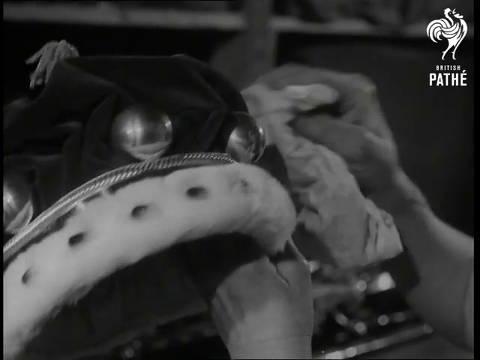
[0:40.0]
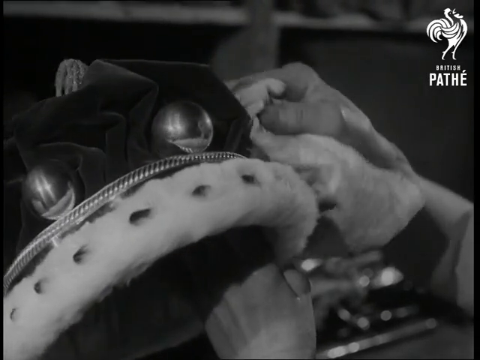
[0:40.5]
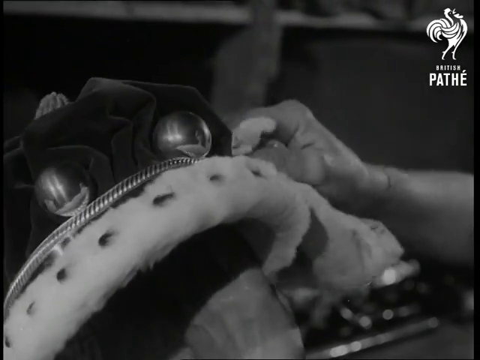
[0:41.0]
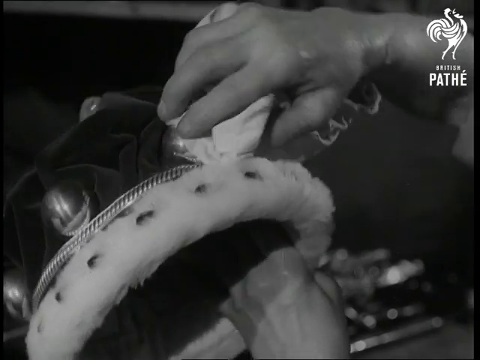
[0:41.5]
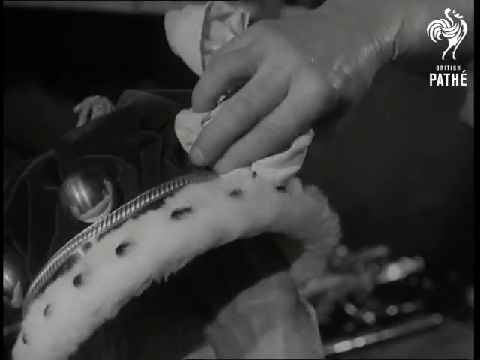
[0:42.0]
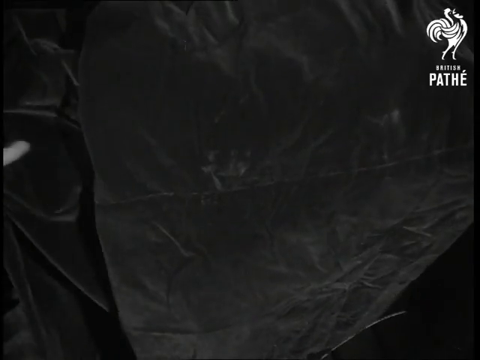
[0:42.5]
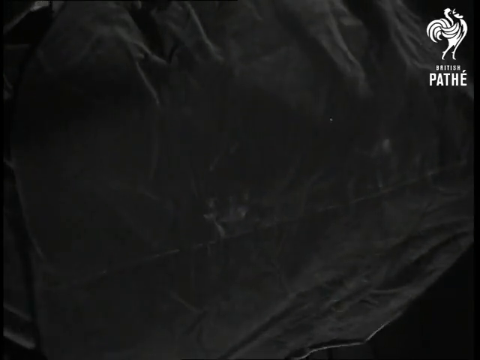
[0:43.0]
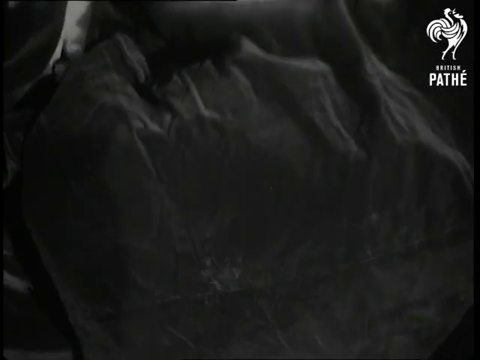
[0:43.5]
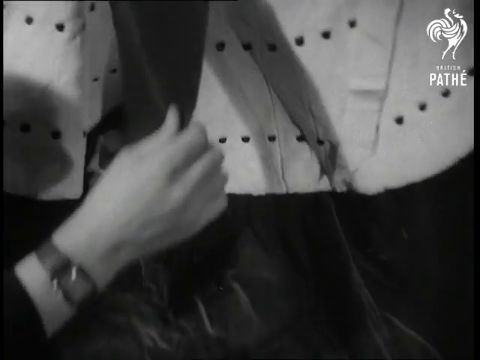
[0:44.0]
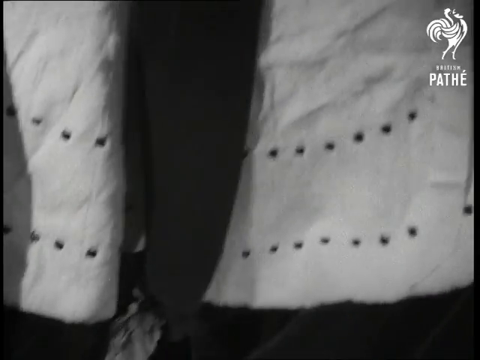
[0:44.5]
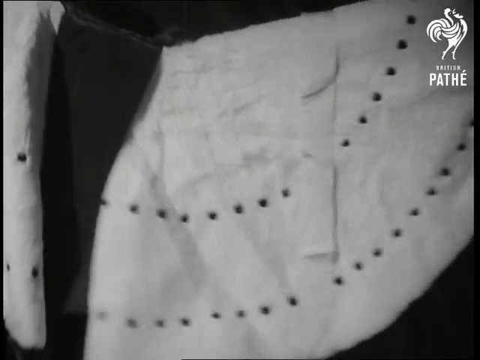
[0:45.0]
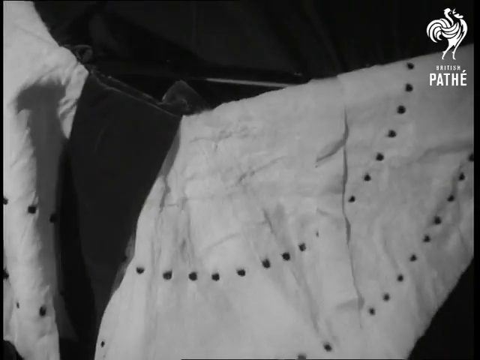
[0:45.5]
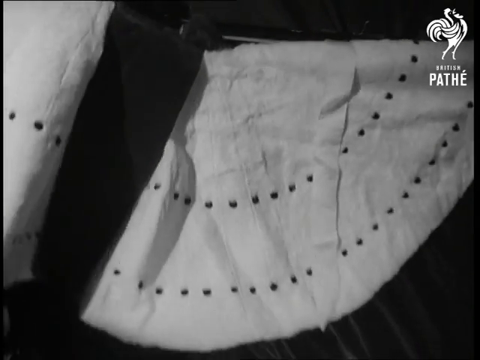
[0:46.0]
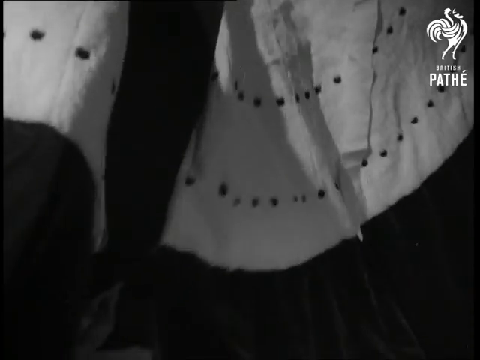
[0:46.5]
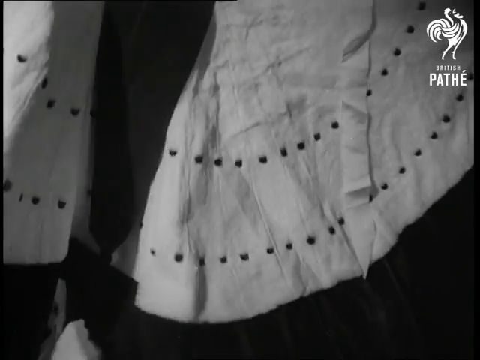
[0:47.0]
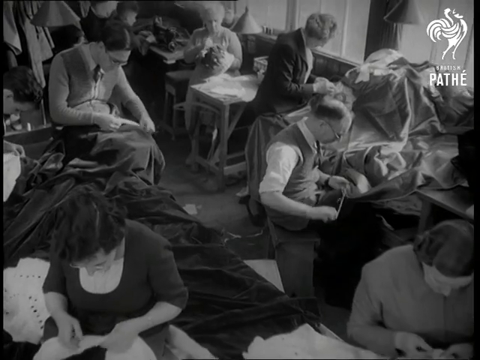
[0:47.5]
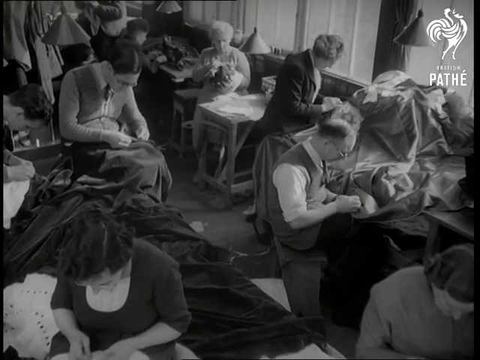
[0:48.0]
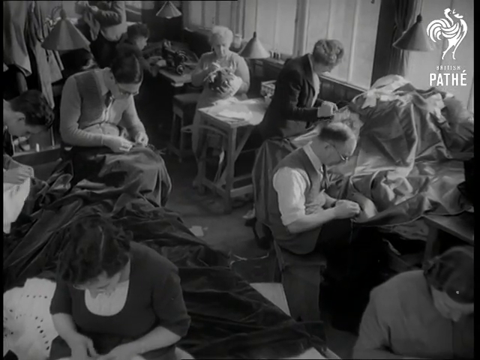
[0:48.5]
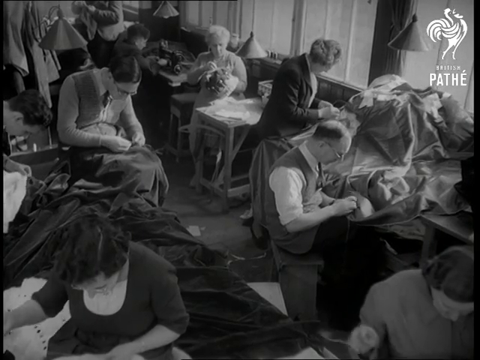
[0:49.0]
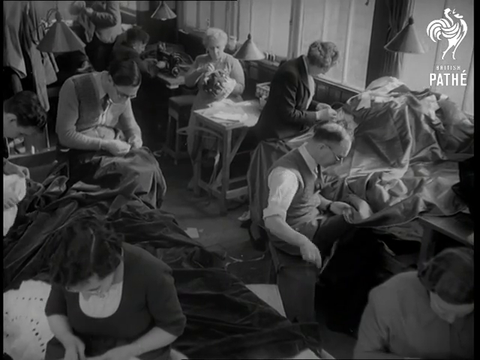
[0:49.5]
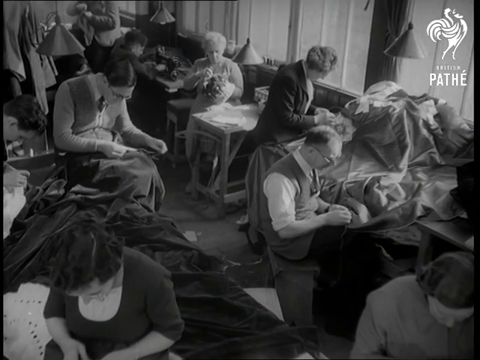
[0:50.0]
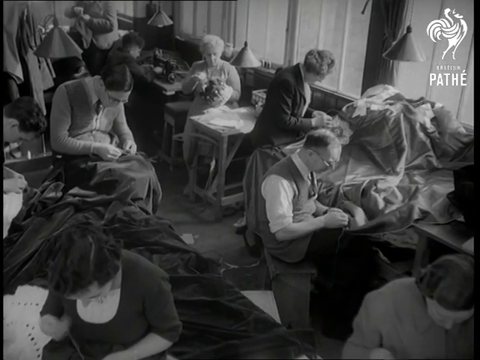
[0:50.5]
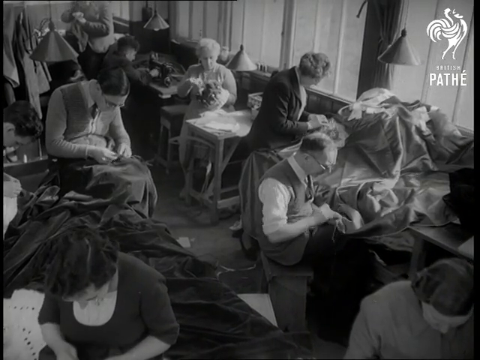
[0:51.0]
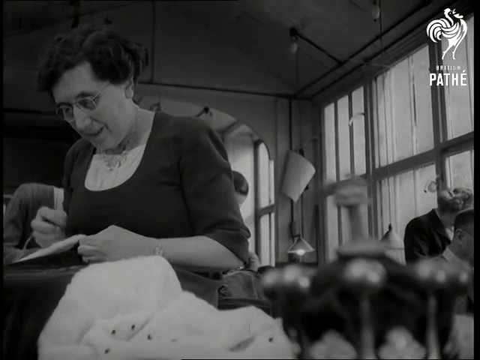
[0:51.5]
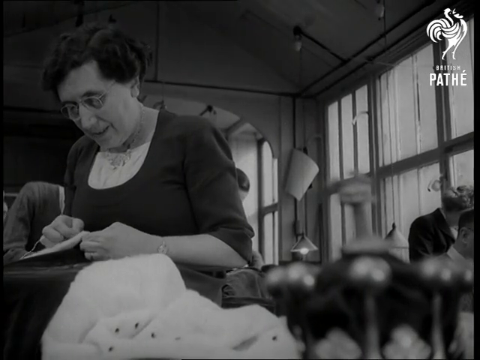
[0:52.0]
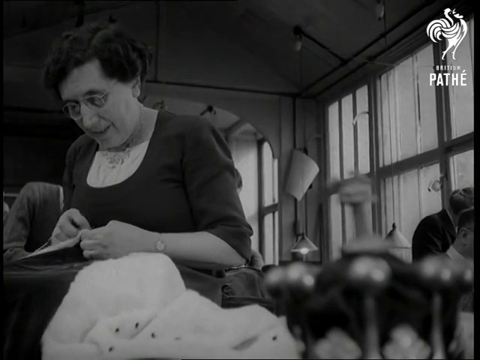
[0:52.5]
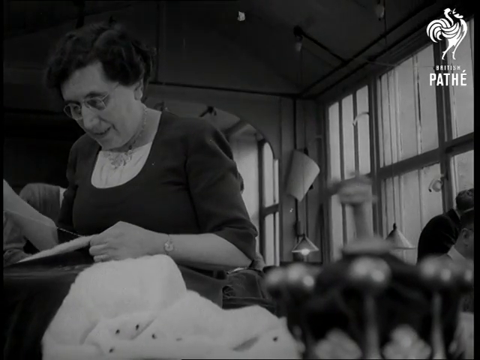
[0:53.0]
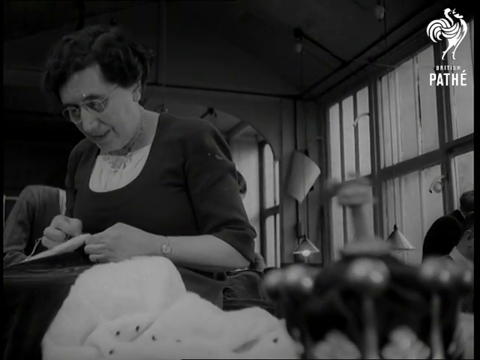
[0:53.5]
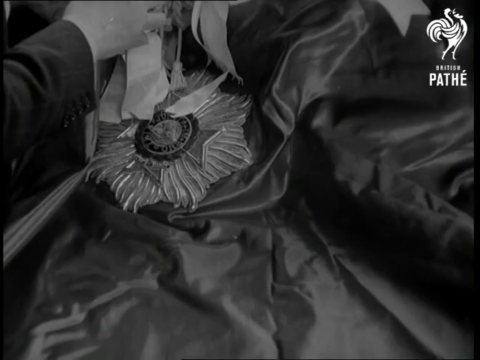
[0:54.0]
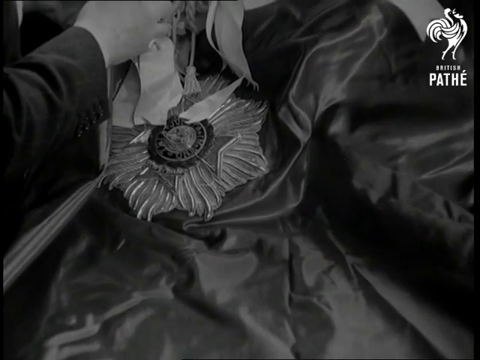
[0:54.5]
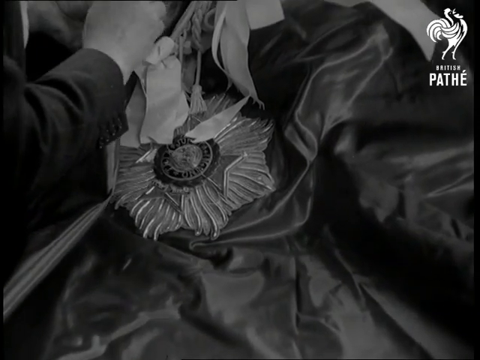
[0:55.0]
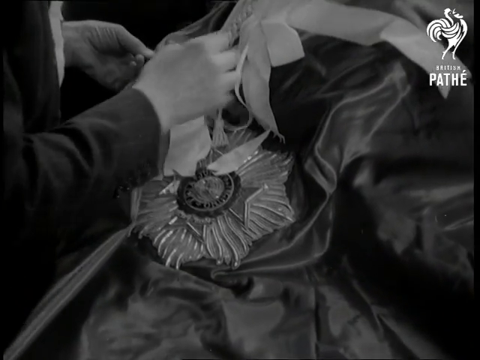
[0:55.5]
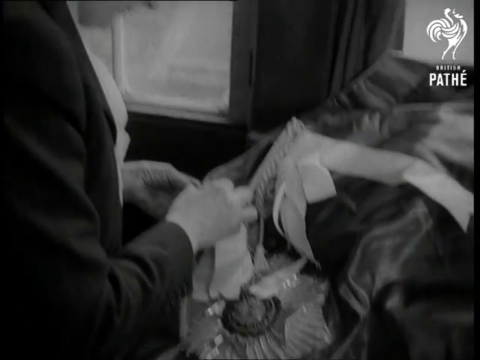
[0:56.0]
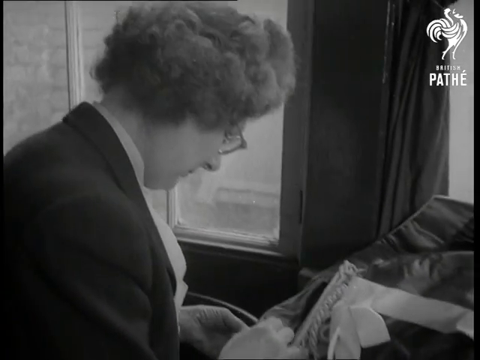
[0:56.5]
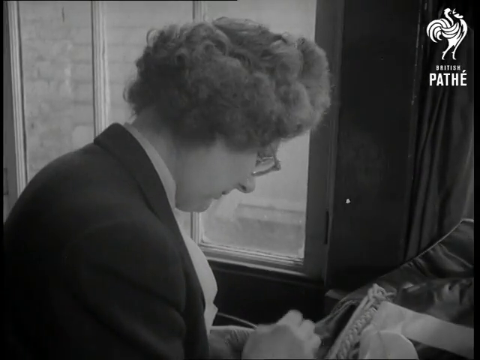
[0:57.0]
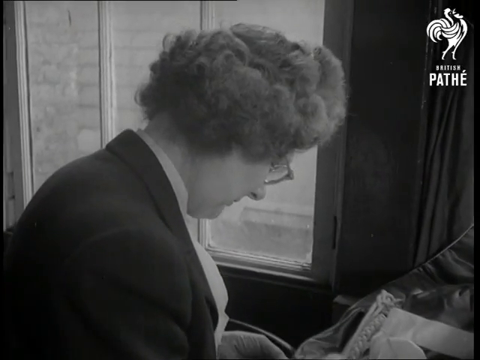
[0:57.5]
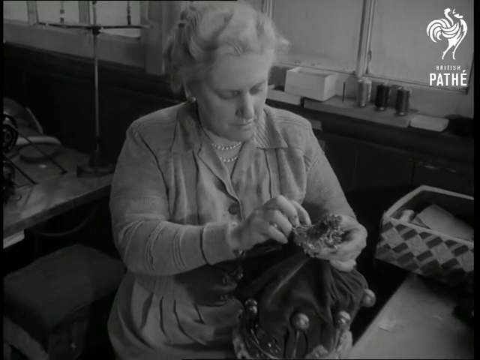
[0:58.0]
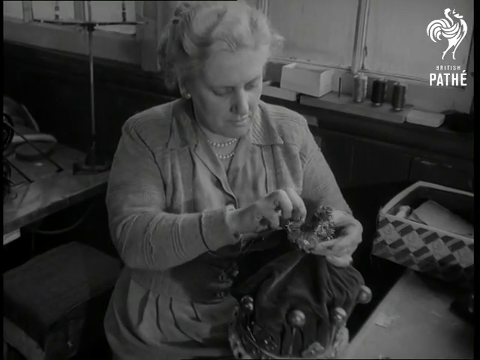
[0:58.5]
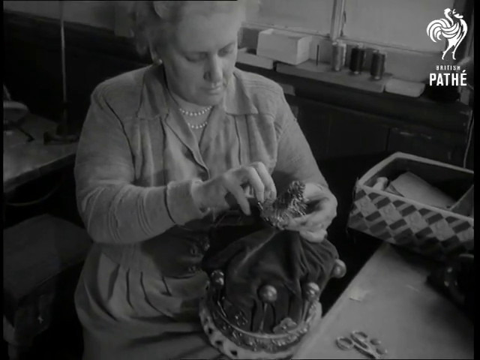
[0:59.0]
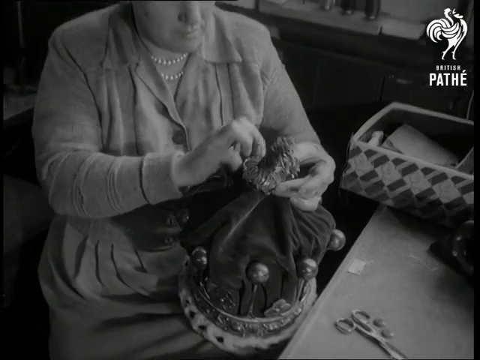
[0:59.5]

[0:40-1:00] He opens a bag containing what looks like a cape or some clothing. The scene then moves to a group of workers, women and men, at tables, stitching and/or knitting clothing, either making it from scratch or repairing it. There is a close-up of a woman wearing glasses with shorter hair, with windows and lamps in the background, followed by a close-up of the material. Another older woman with glasses works on clothing. Yet another woman, older with white hair and wearing pearls, works on a crown and looks like she is affixing something to its top. The footage remains black and white.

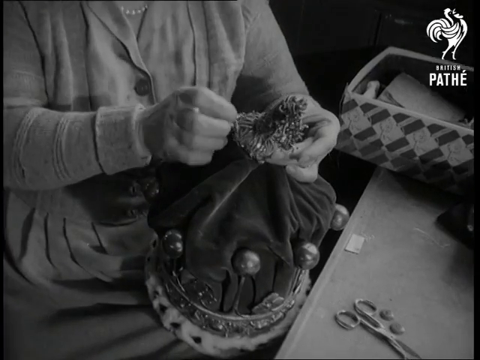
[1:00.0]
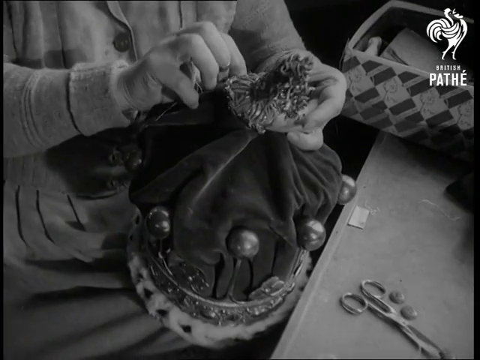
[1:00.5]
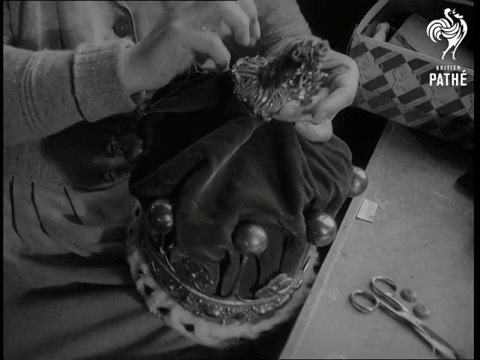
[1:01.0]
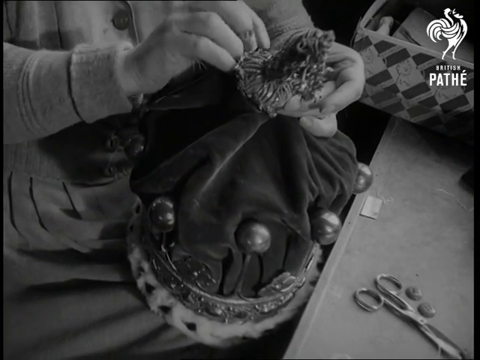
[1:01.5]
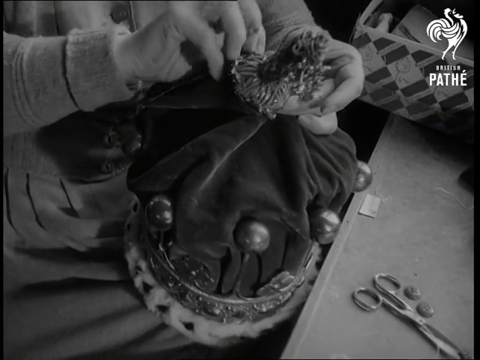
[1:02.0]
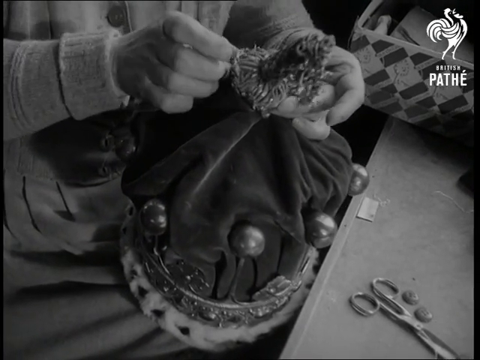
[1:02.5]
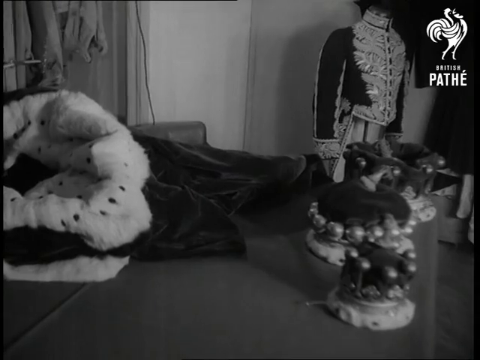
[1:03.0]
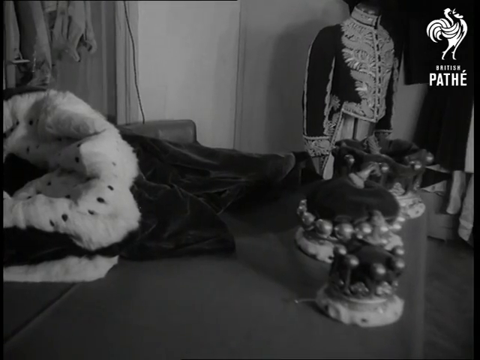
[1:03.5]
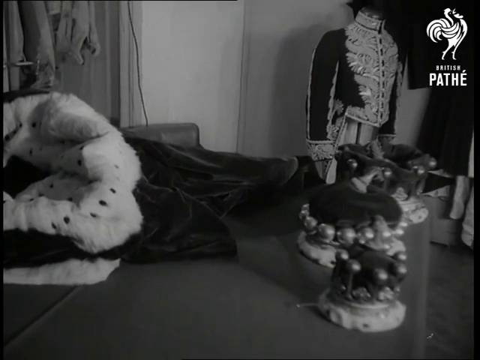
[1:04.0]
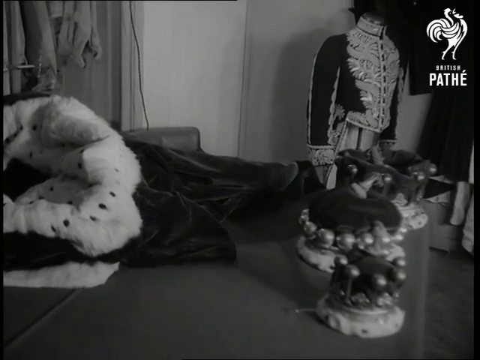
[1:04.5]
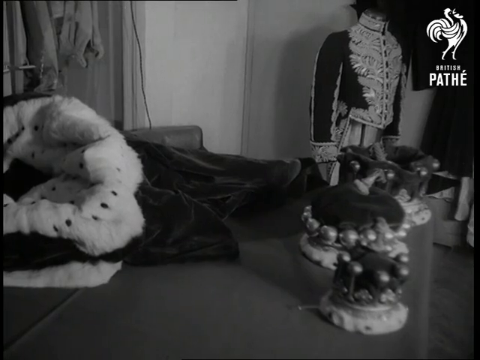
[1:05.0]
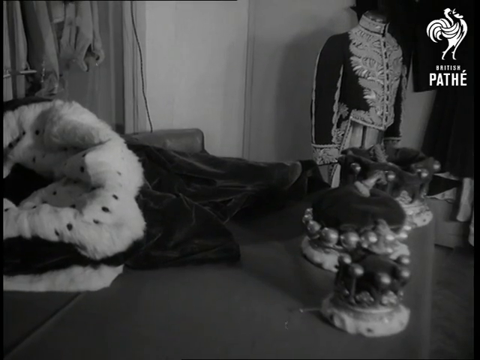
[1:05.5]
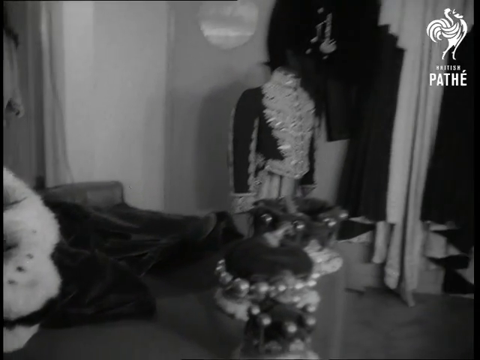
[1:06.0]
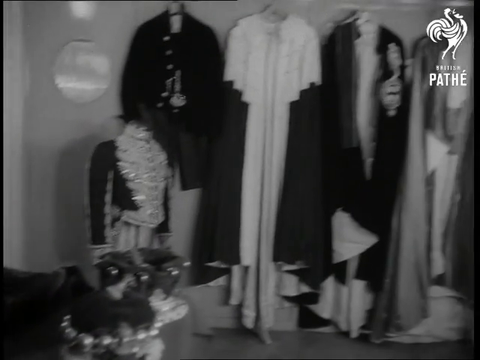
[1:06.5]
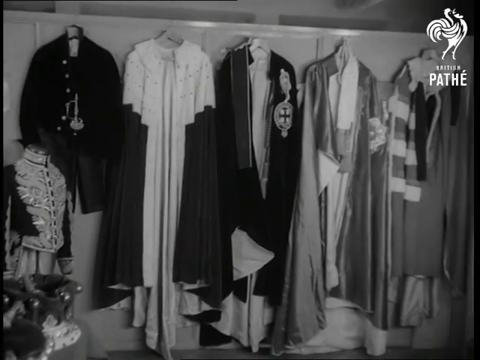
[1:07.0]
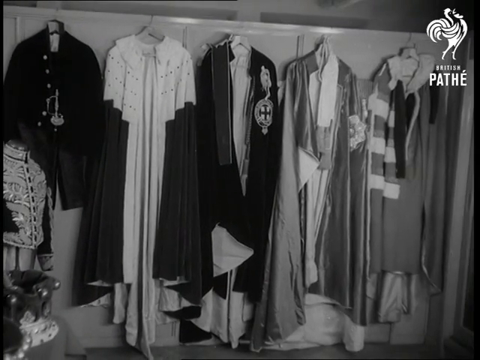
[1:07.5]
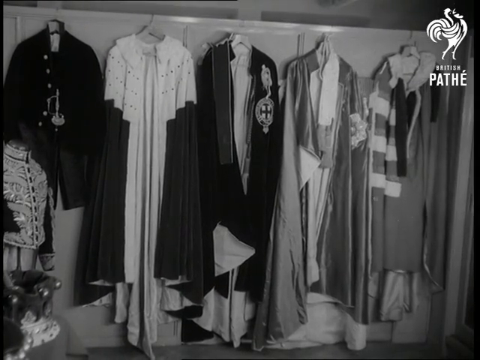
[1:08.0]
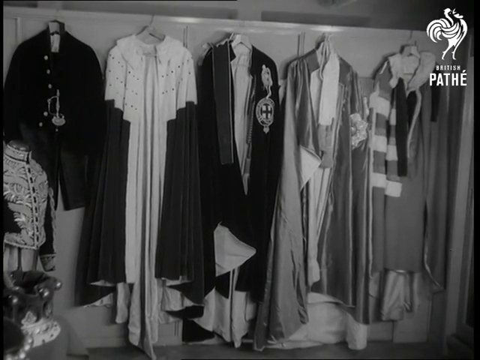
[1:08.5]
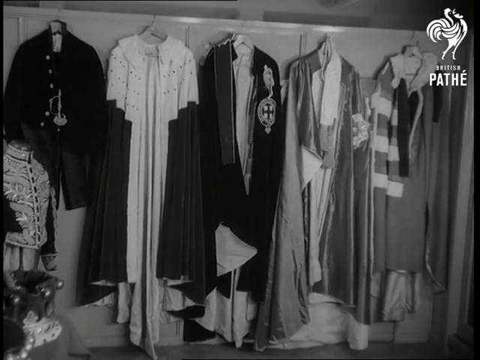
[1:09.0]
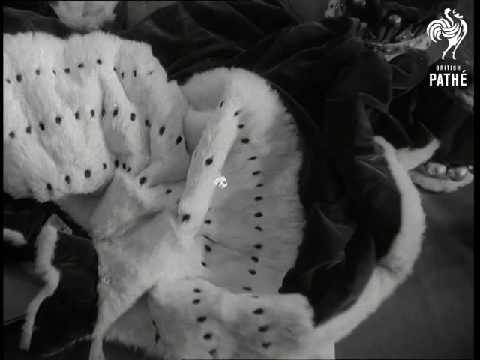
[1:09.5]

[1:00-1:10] A number of costumes are hung up on hangers against the wall, in various shades, some darker, some lighter, some in between, and some with crosses affixed to them. The footage is black and white, so the colours cannot be seen. A mannequin is in the background, and various pieces of clothing are on display.